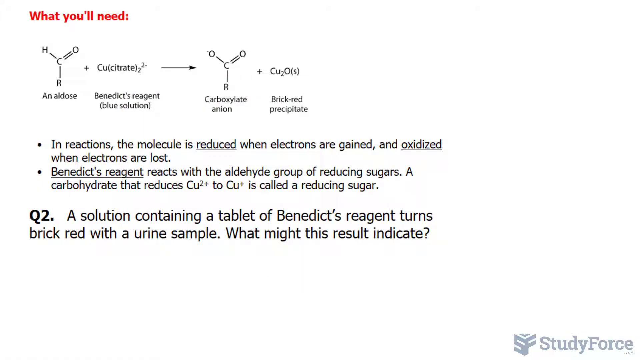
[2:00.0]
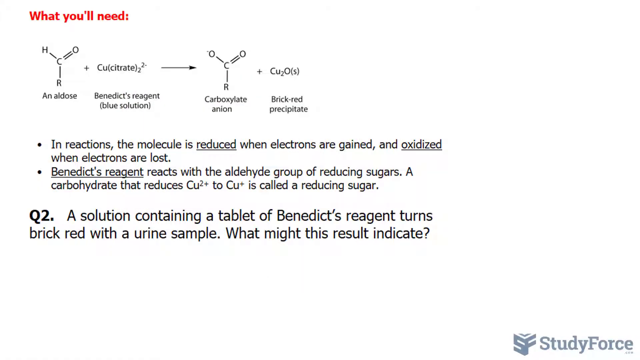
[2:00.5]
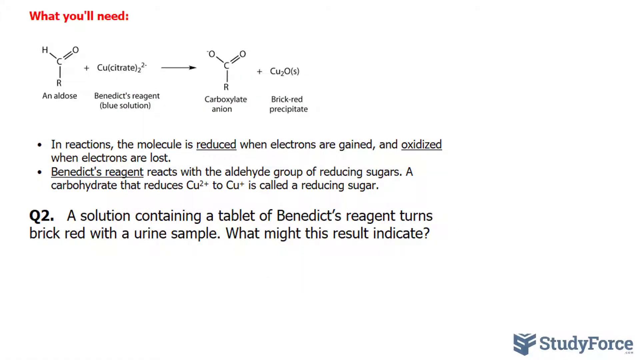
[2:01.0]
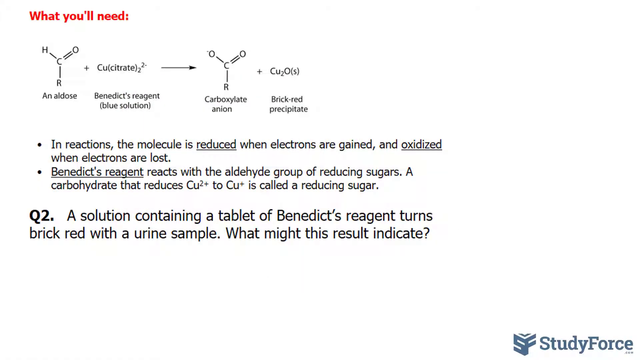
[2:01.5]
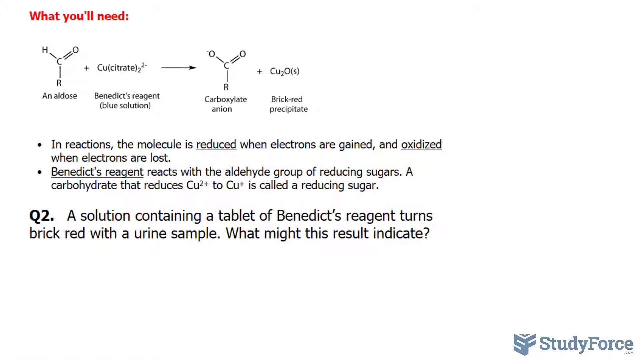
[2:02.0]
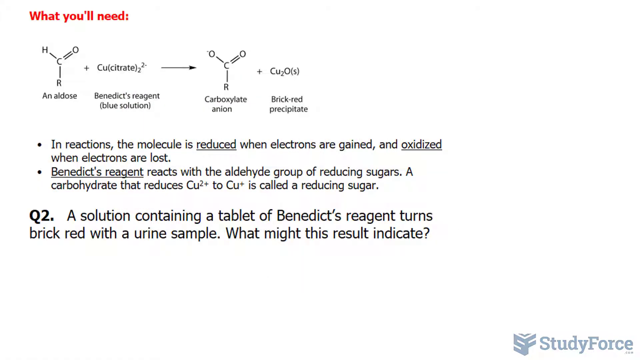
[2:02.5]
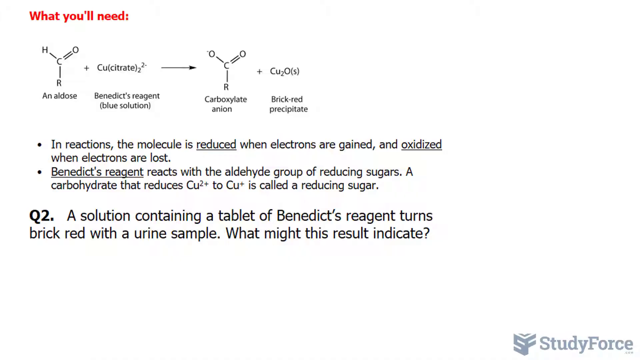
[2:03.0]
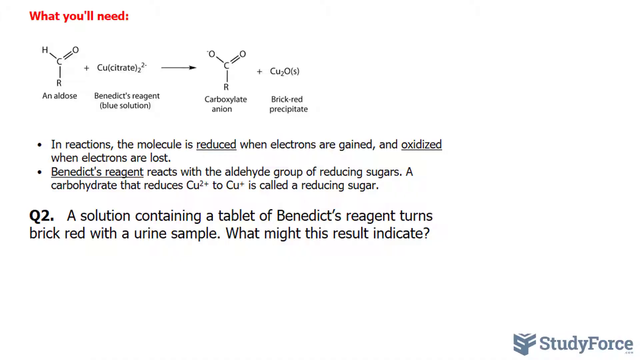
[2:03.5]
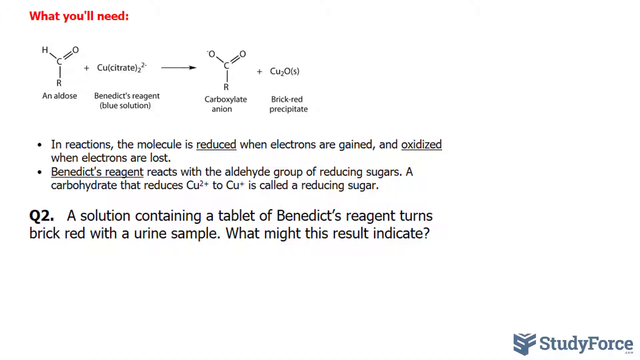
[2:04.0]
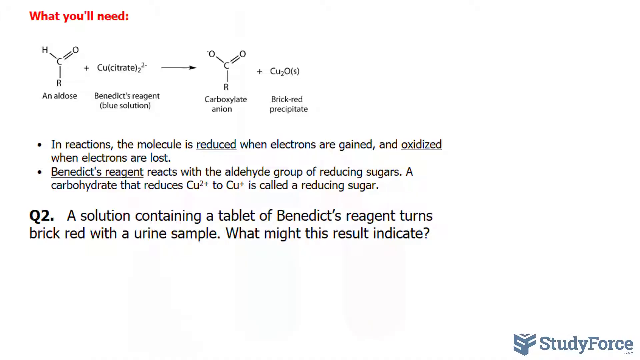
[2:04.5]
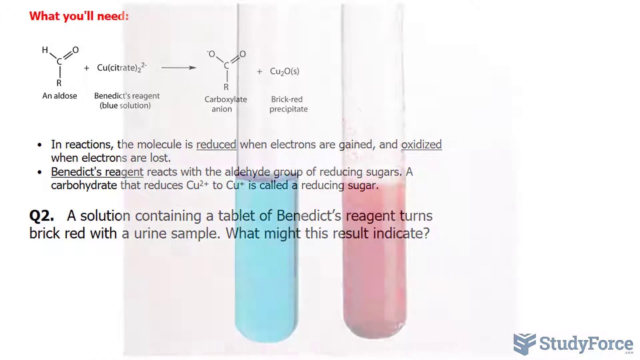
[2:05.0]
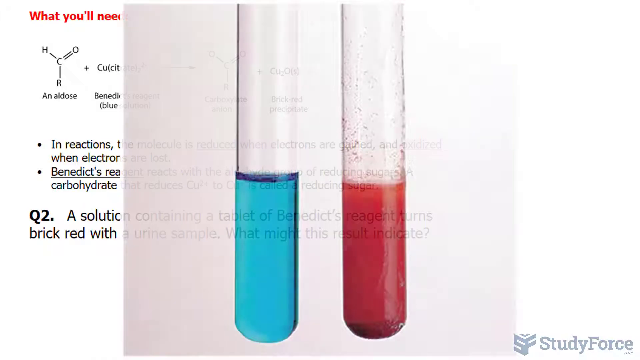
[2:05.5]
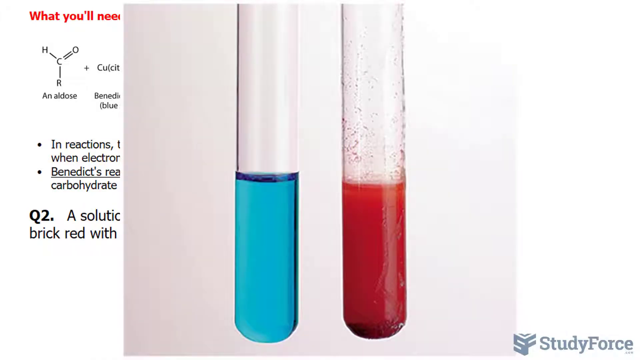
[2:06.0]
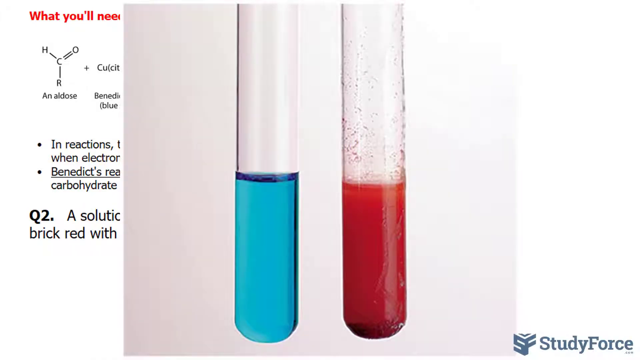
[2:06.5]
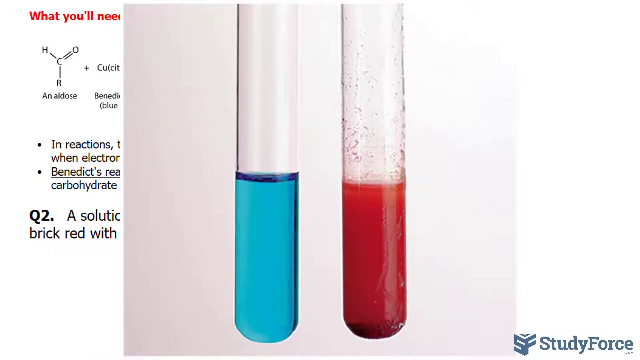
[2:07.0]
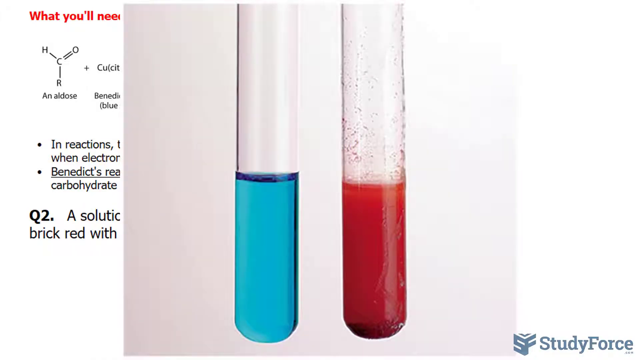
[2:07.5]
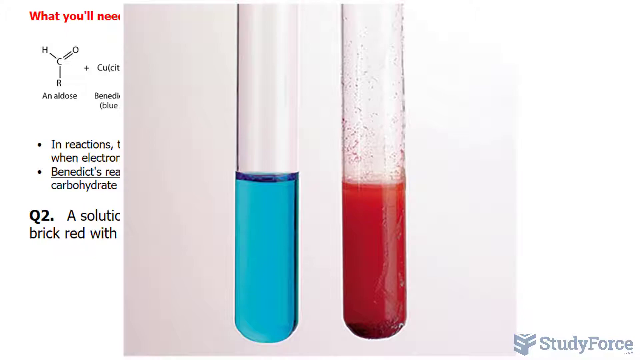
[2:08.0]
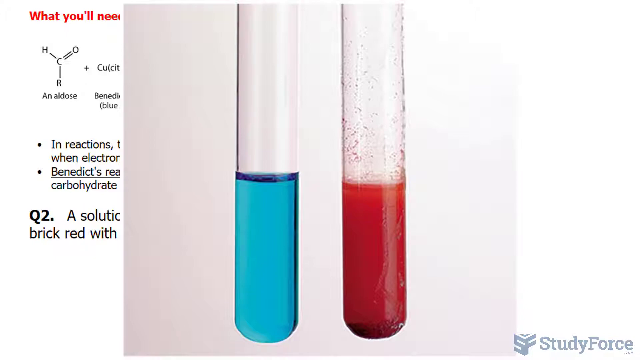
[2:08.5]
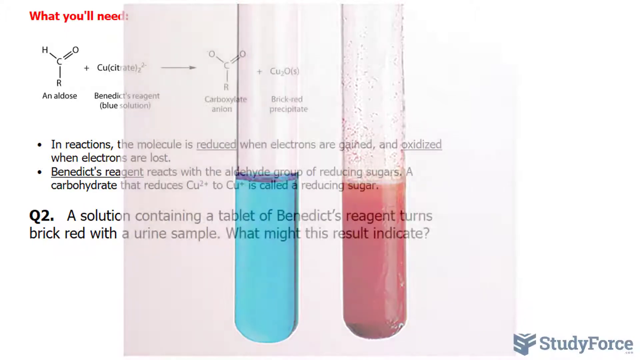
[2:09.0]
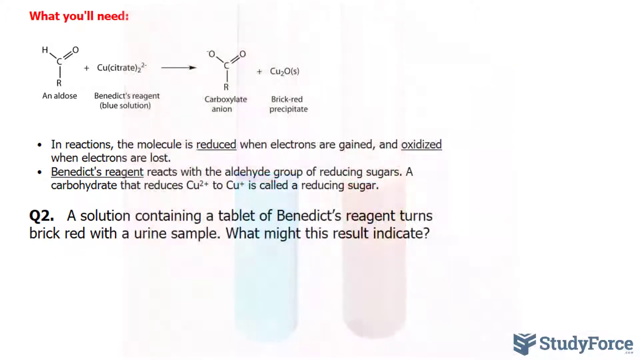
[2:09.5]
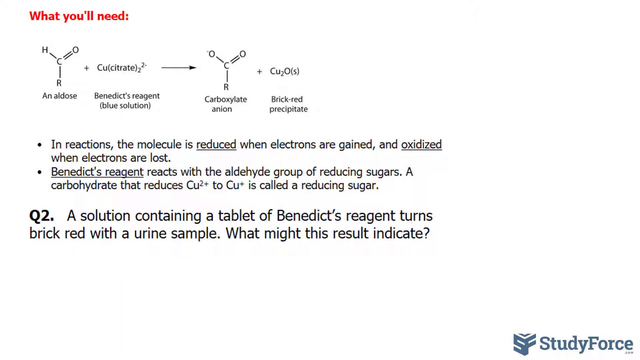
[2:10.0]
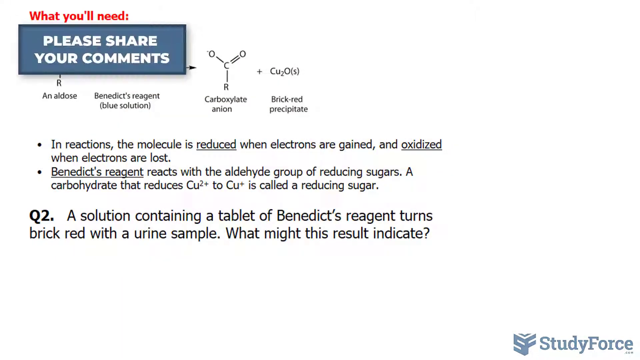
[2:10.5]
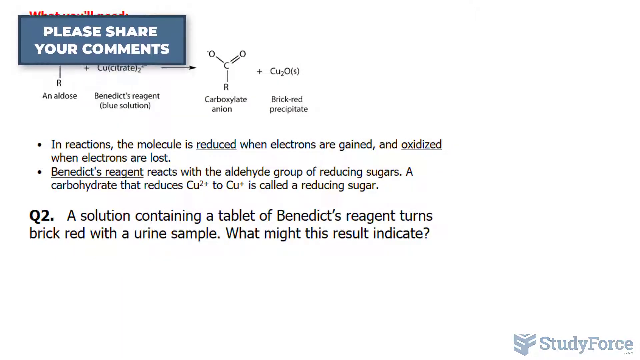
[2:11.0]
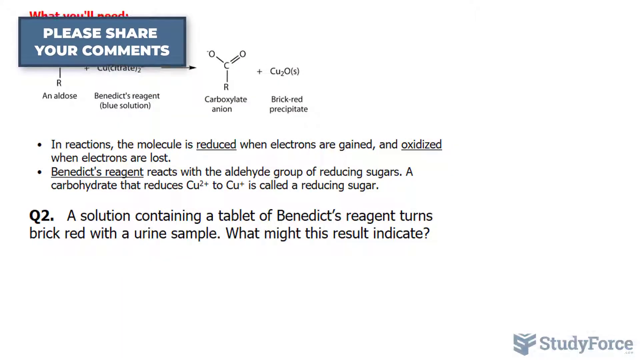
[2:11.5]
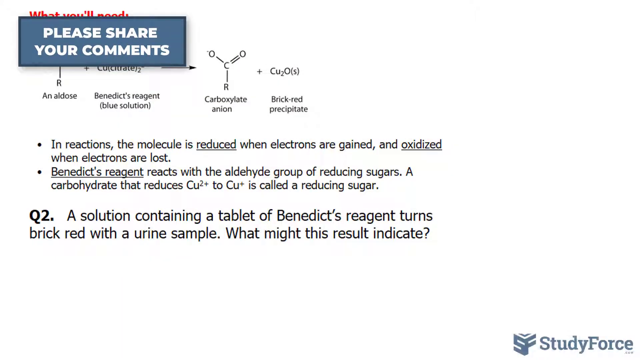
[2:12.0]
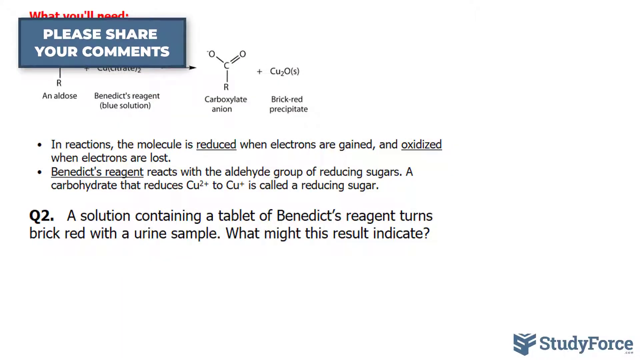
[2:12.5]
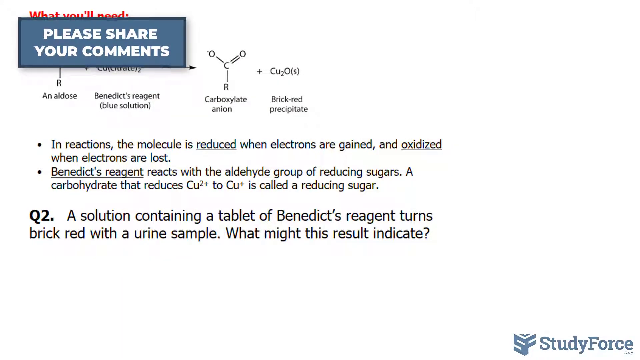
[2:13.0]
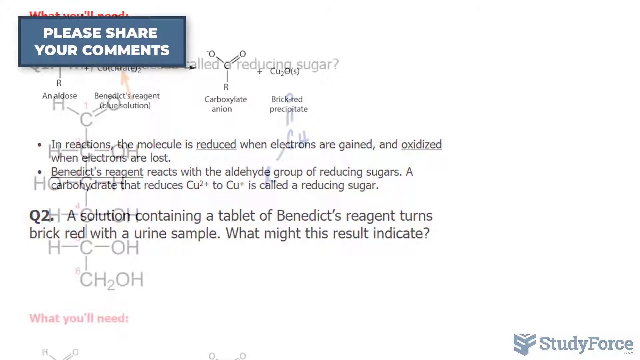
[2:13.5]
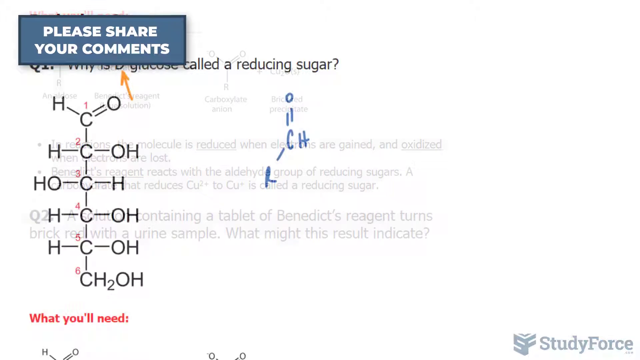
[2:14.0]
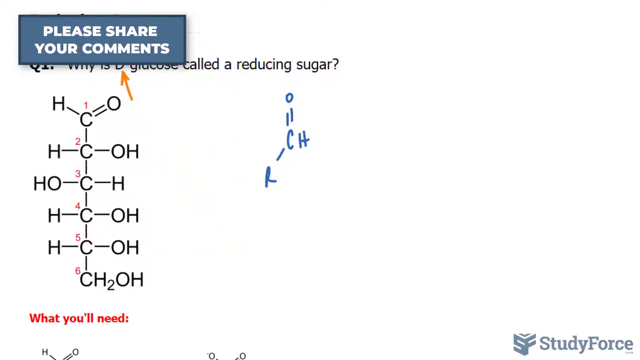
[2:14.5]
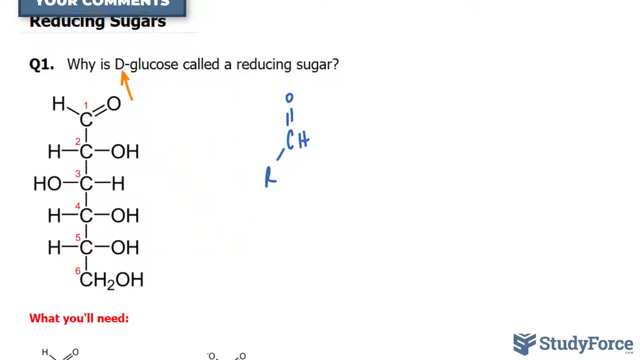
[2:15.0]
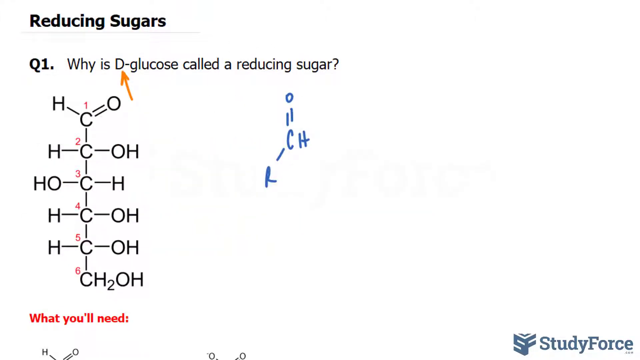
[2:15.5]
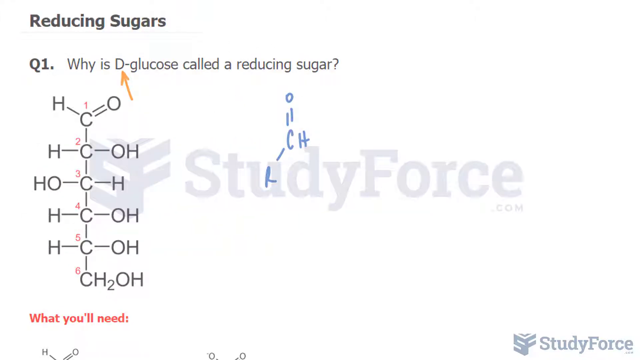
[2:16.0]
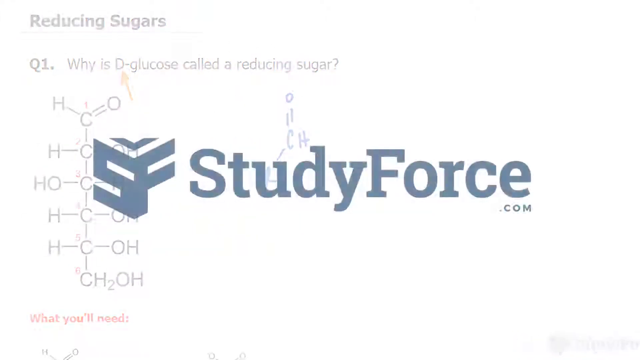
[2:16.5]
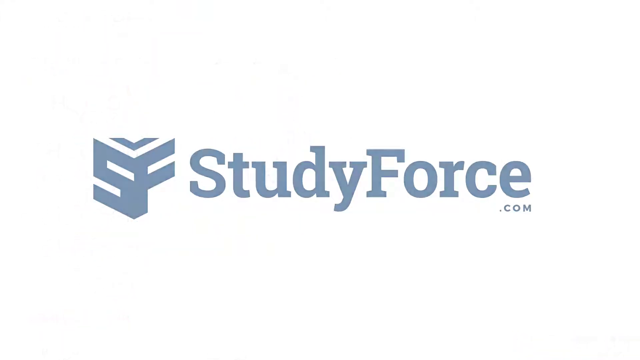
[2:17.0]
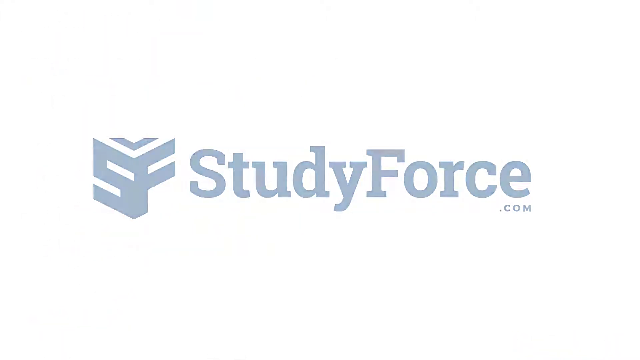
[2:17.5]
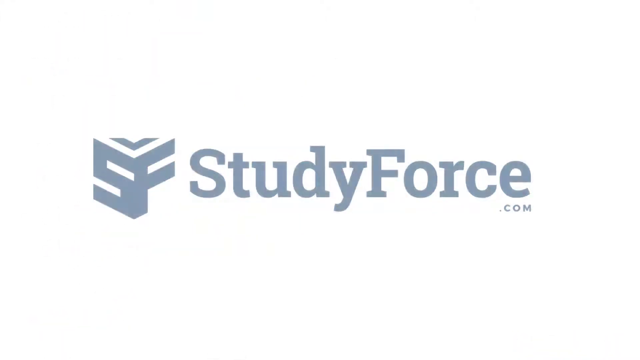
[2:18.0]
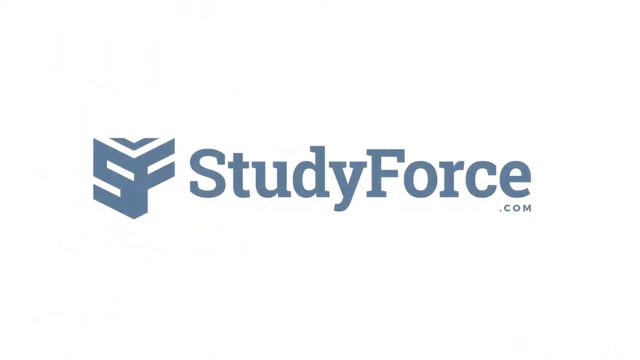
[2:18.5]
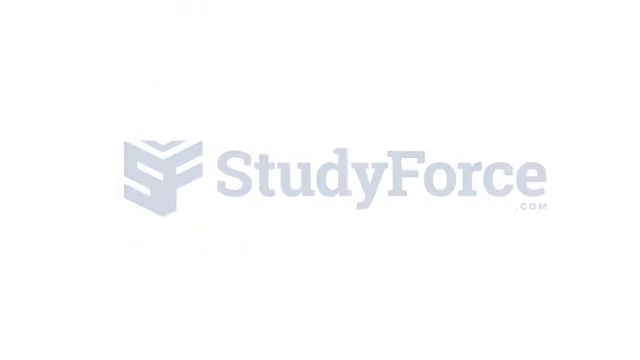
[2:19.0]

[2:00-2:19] Two test tubes appear at the top of the question page: one holds a blue substance and the one next to it holds a red substance. The blue test tube has a very clear empty space above the blue substance, while the red test tube has the red substance at the bottom and the upper part is not very clear. The test tubes disappear and the question is seen again. A button reading "please share your comments" appears above the questions, and studyforce.com is beneath the question. The question "why is D-glucose called a reducing sugar" is highlighted, with the bold headline "reducing sugar" also there. The screen then switches to studyforce.com in a blue font with an SF symbol at the start, which then disappears, ending the video.